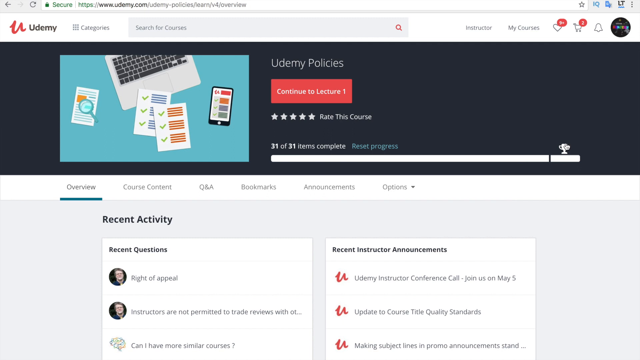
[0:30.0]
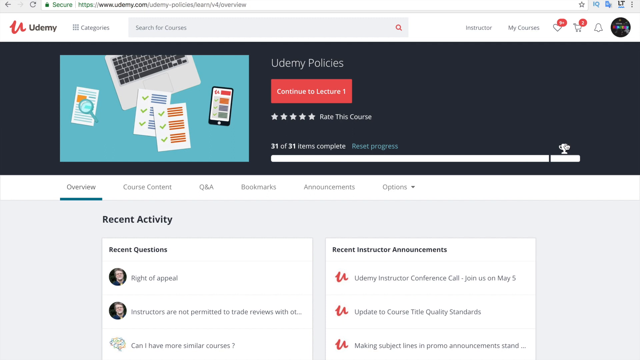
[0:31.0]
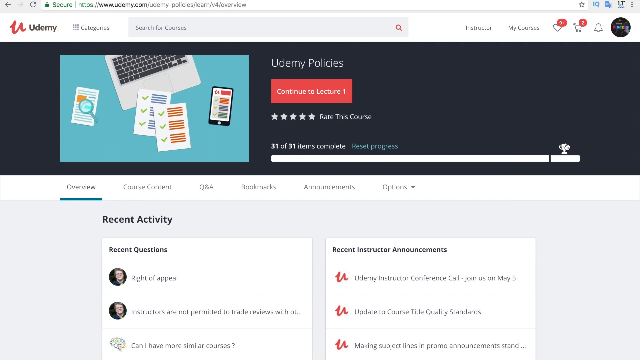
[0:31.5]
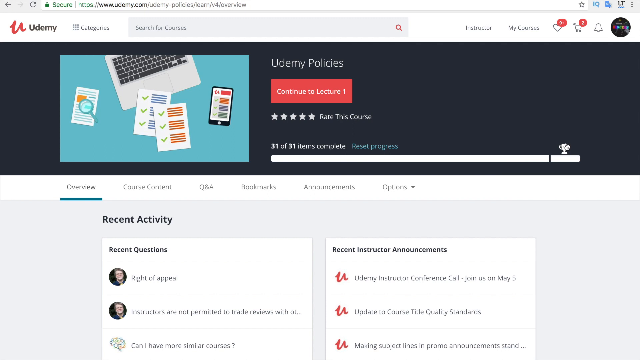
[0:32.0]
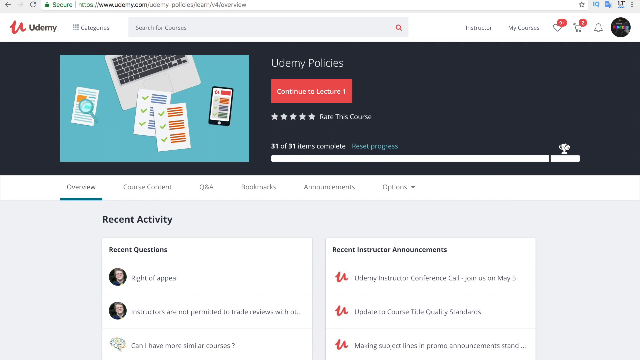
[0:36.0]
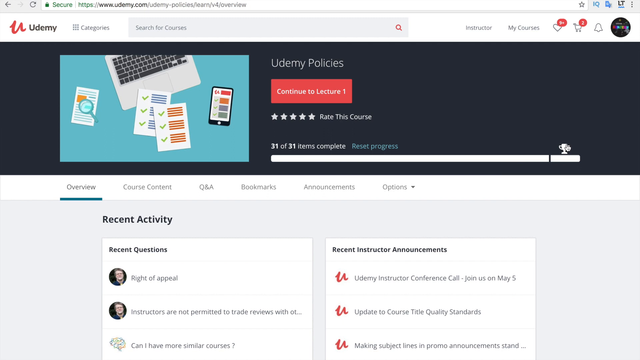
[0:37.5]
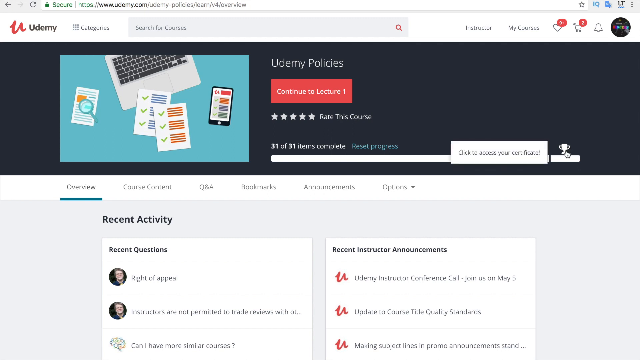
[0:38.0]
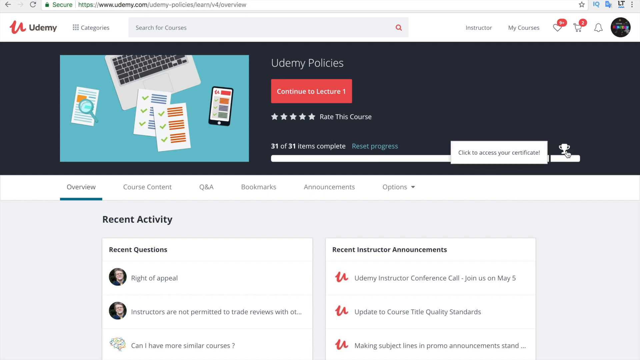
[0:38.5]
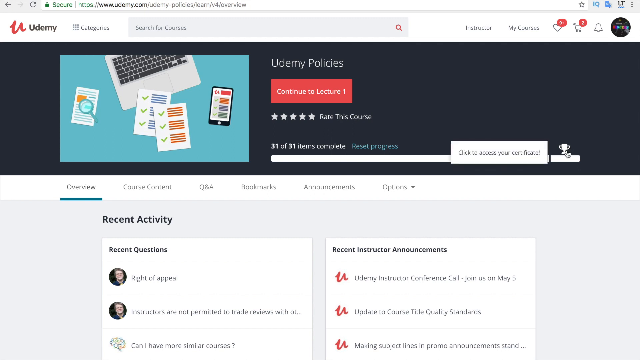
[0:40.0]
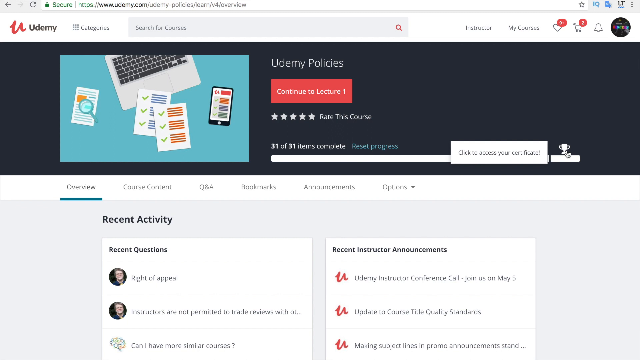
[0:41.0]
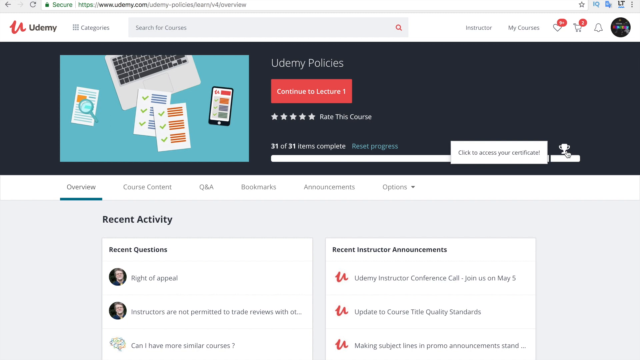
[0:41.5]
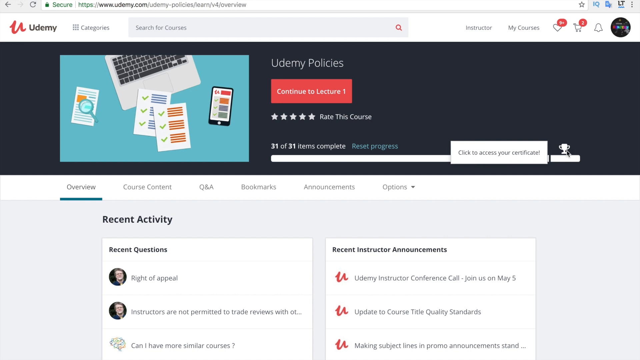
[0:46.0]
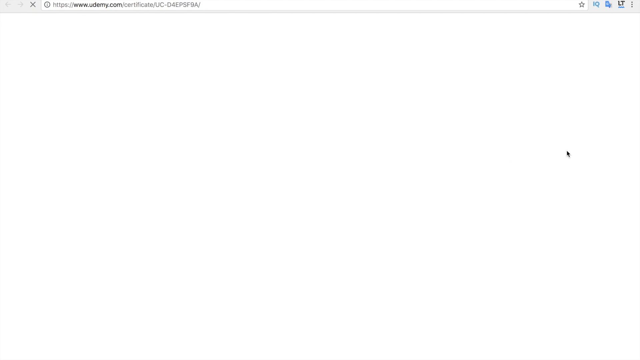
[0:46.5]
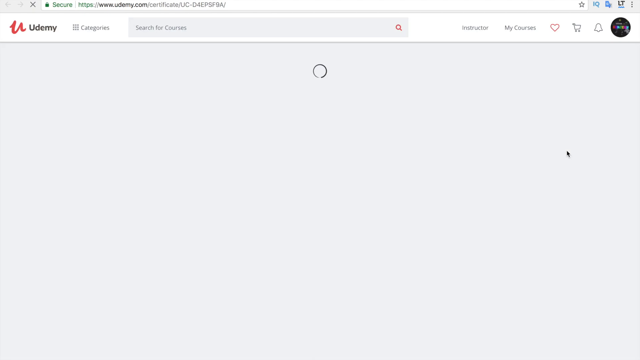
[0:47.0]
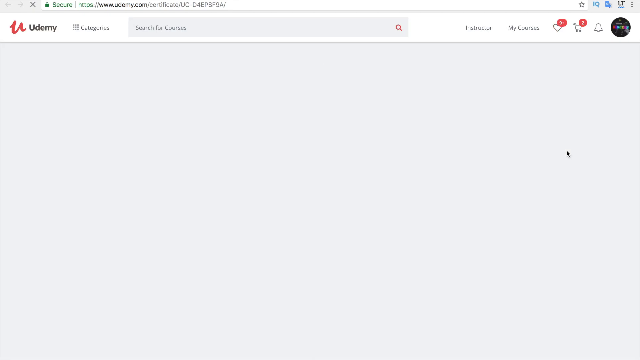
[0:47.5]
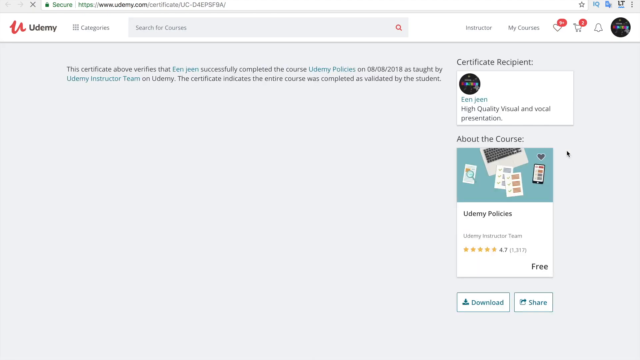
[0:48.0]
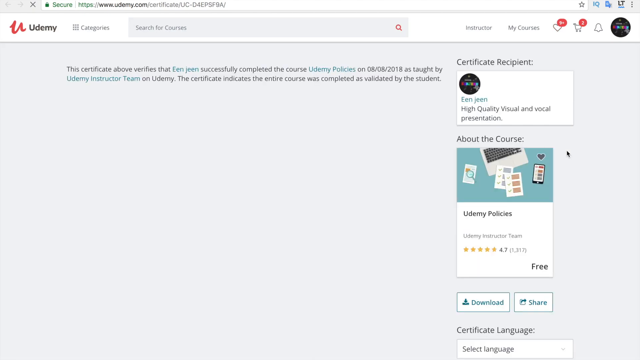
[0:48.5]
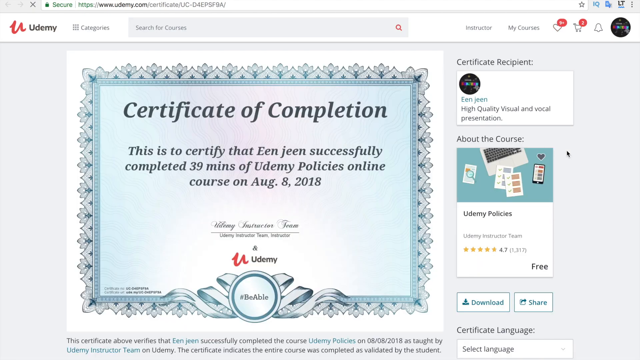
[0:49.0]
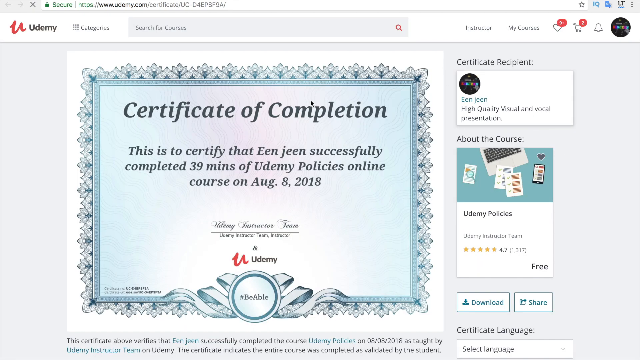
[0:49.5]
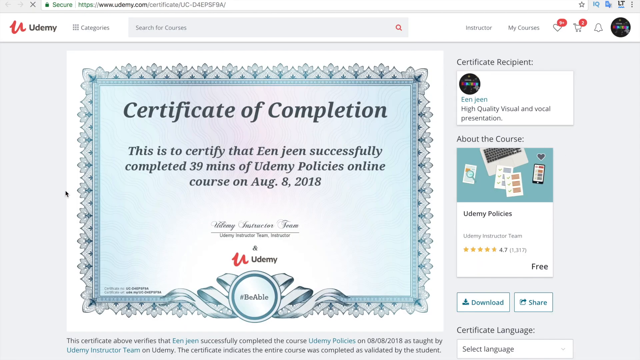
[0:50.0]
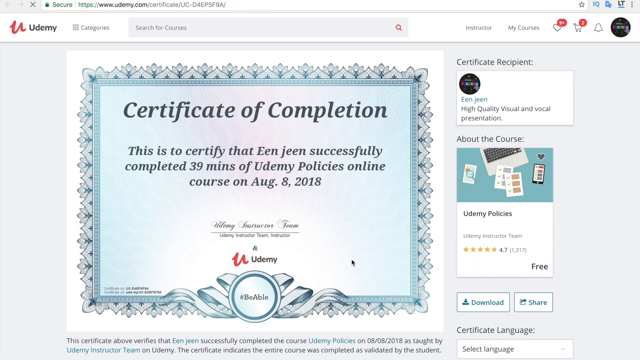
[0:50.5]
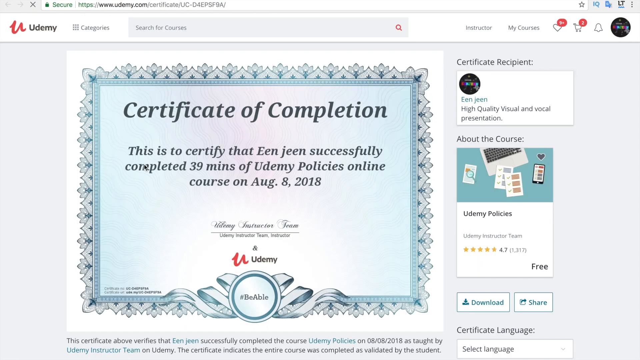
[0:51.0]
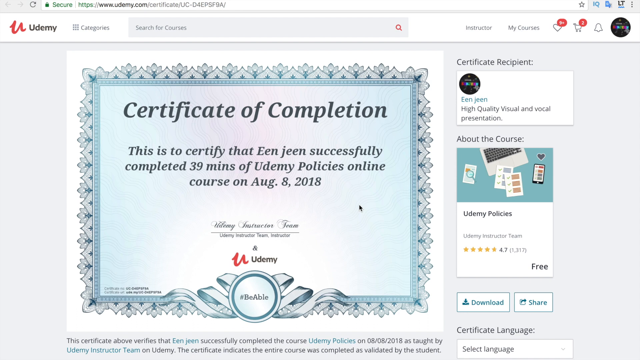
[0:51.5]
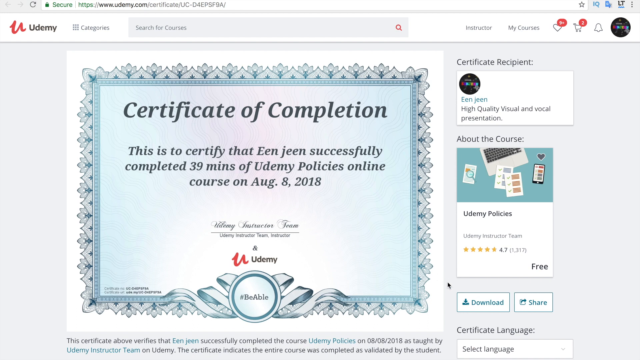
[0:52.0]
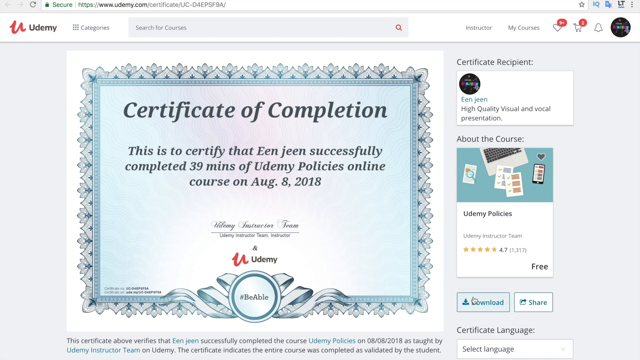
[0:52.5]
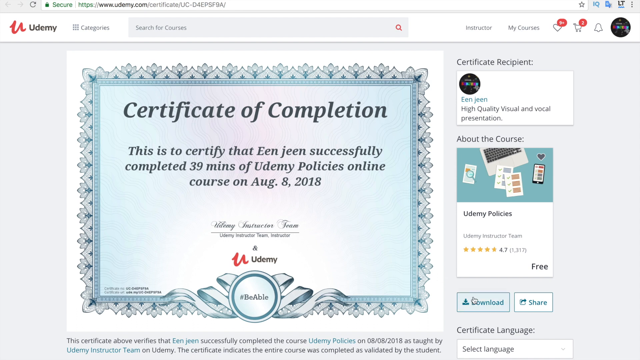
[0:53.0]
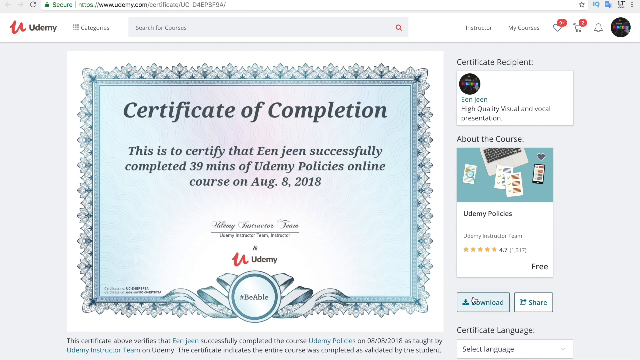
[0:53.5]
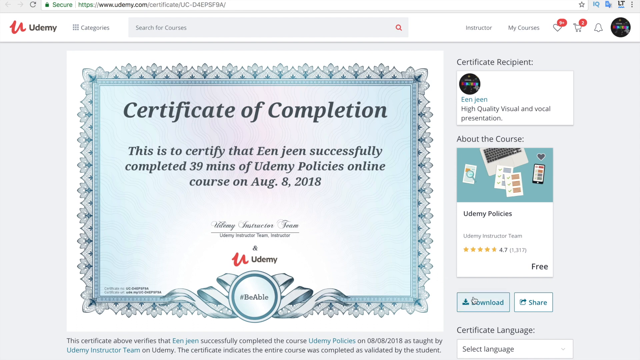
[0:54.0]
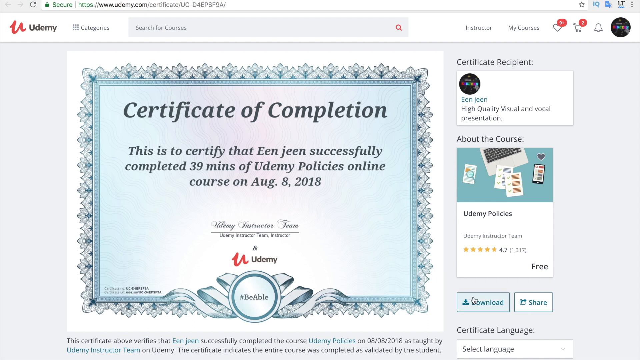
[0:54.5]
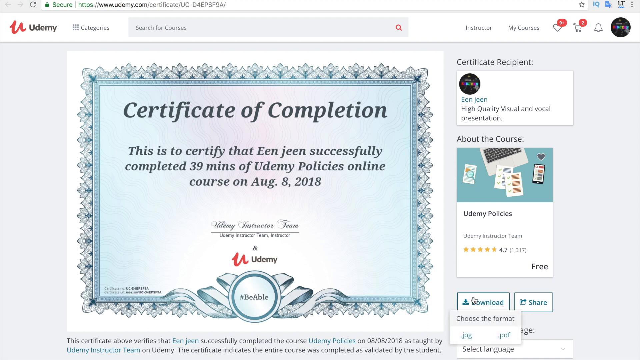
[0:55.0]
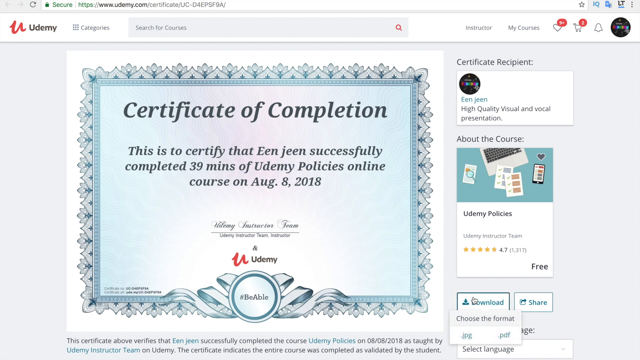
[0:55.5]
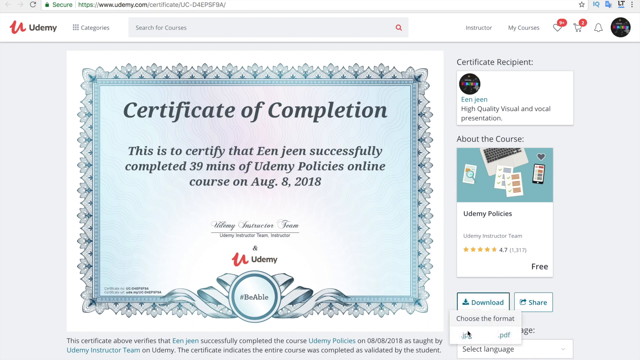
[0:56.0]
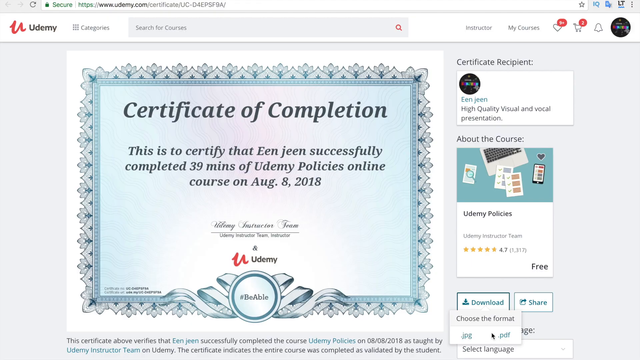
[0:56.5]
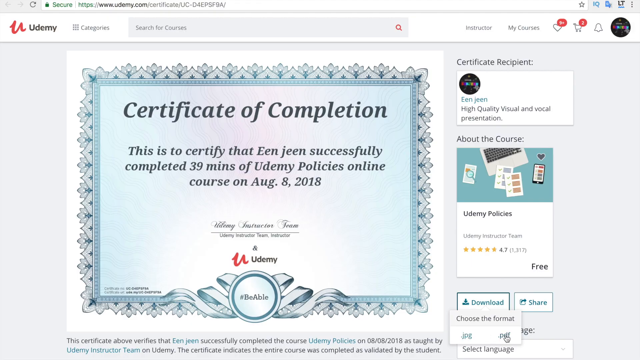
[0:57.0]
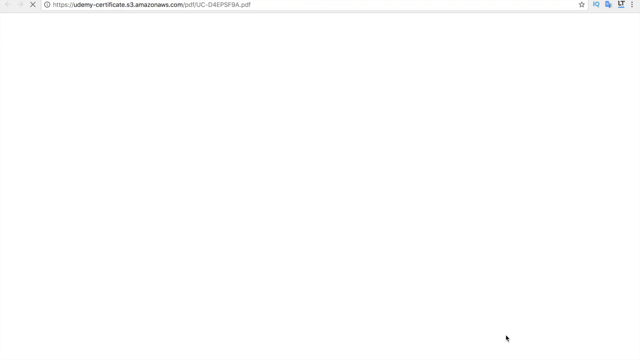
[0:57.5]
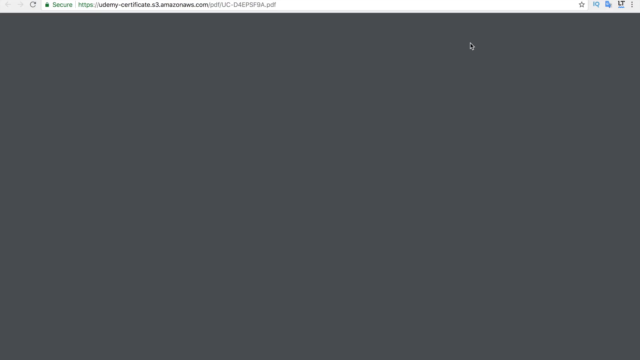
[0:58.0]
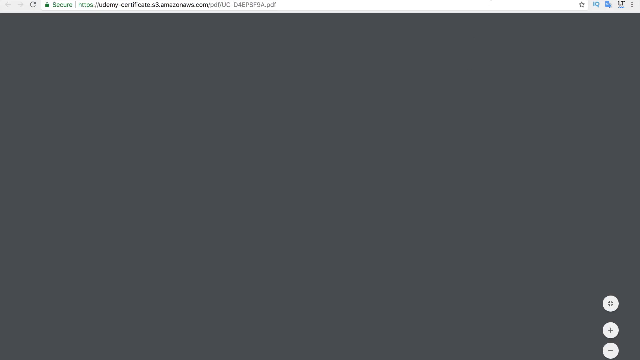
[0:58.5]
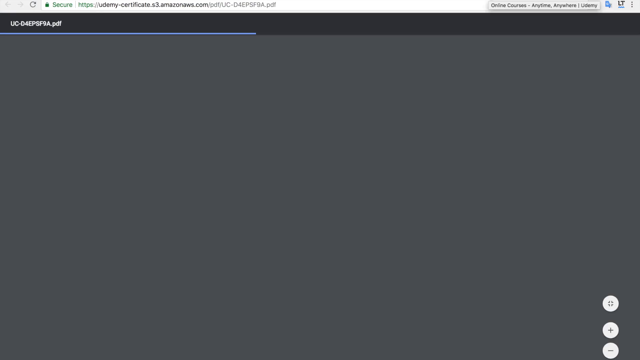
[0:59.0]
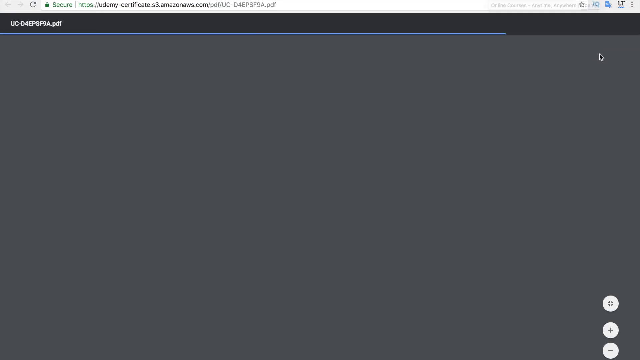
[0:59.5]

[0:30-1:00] As the cursor hovers over the trophy icon, a small pop-up appears saying "click to access your certificate." After it is clicked, a gray loading screen briefly appears, and then a certificate of completion in a standard certificate template is displayed. It reads "this is to certify that Een jeen successfully completed 39 minutes of Udemy Policies online course on August 8, 2018," with a small signature and the Udemy logo underneath. The cursor hovers over the certificate. On the right-hand side of the screen are the certificate recipient's name and information about the course, Udemy Policies, along with Download and Share buttons. The cursor hovers over the Download button and clicks it, and a "Choose Your Format" drop-down menu appears. The cursor points to the jpg option, then moves to the pdf option and clicks it, and the PDF begins downloading.